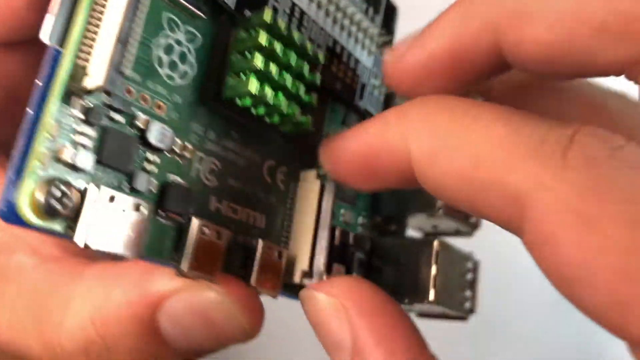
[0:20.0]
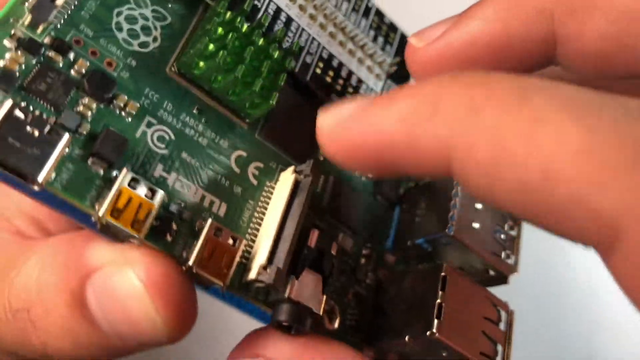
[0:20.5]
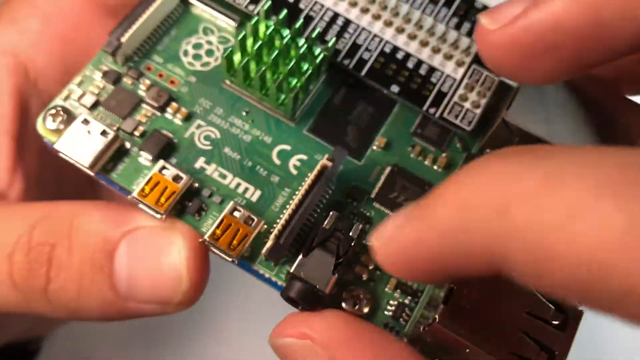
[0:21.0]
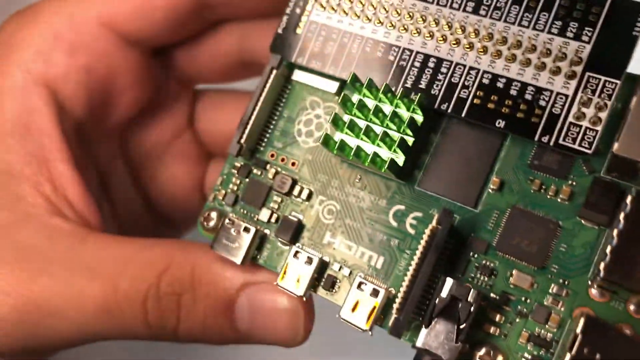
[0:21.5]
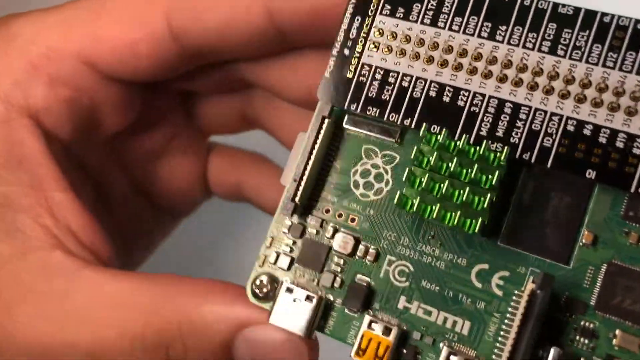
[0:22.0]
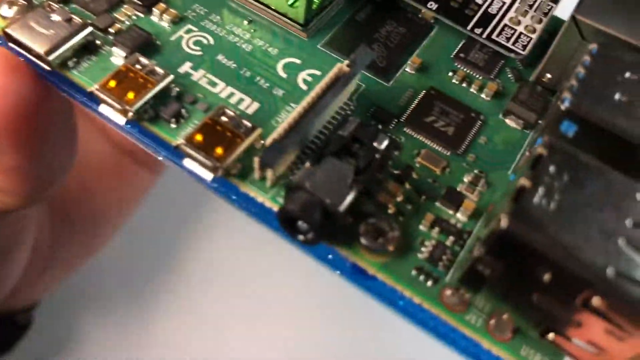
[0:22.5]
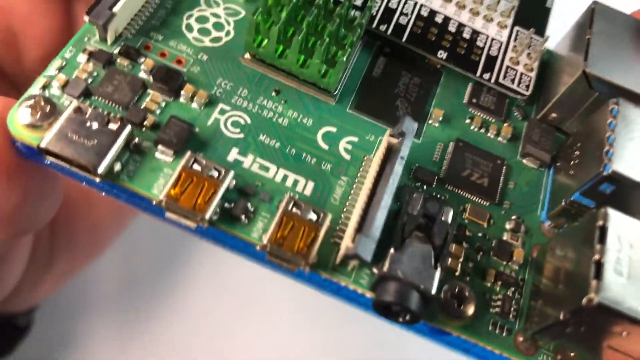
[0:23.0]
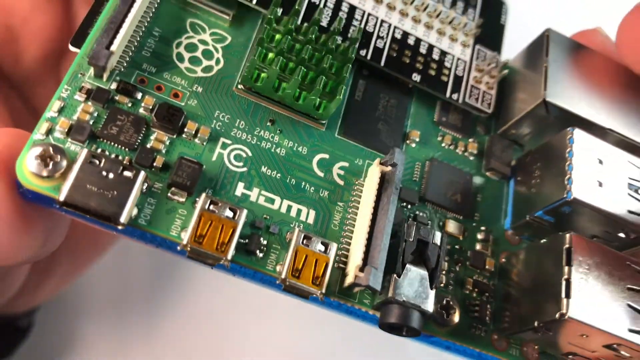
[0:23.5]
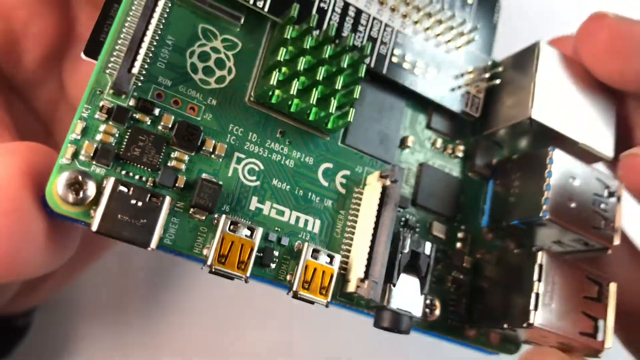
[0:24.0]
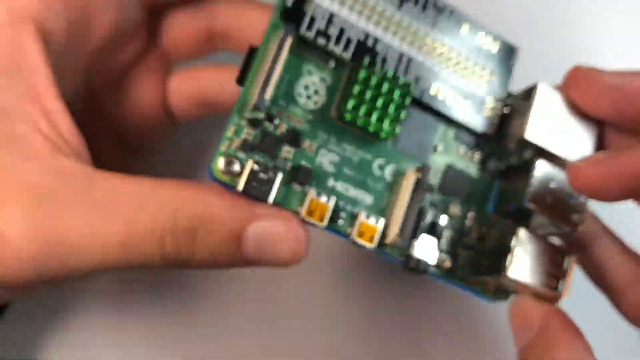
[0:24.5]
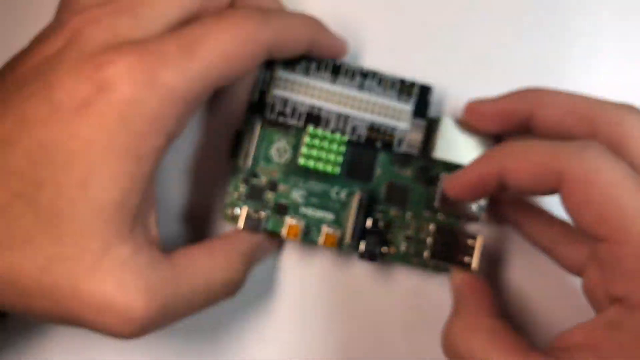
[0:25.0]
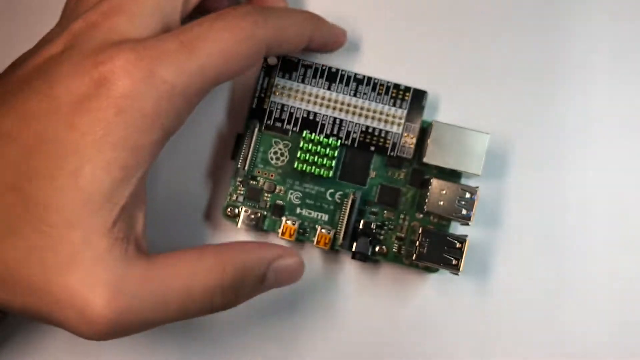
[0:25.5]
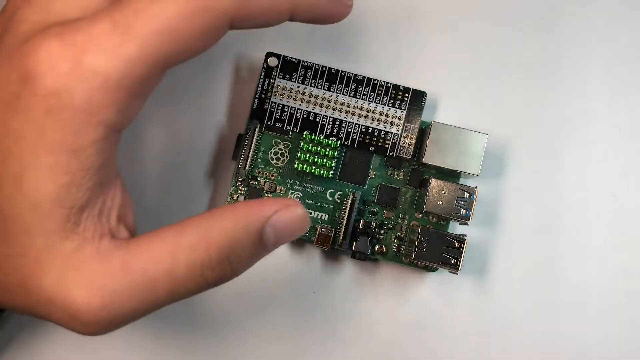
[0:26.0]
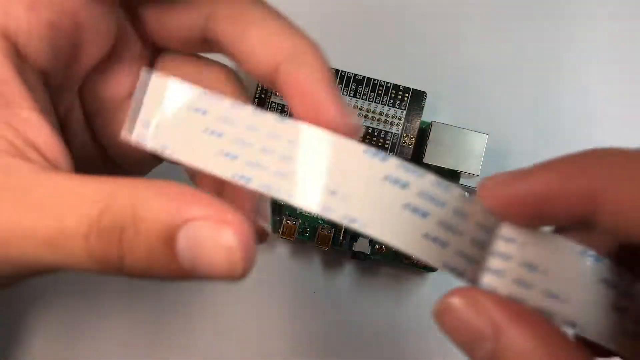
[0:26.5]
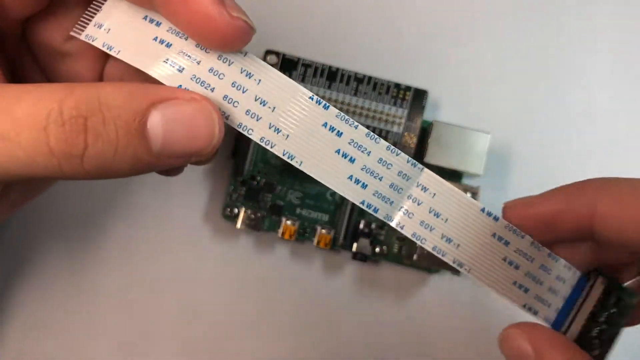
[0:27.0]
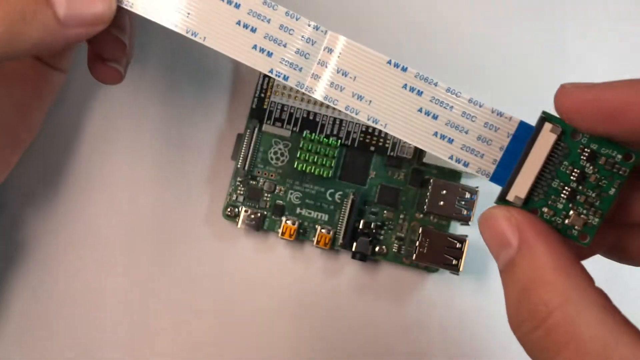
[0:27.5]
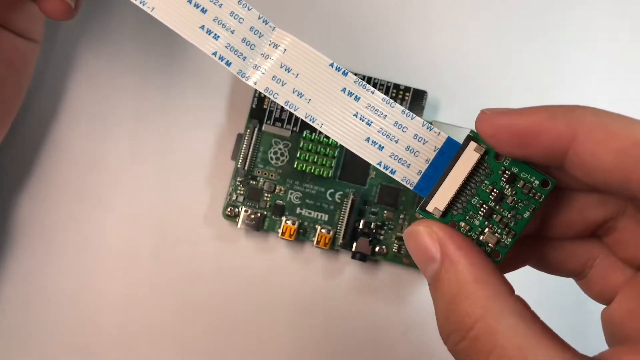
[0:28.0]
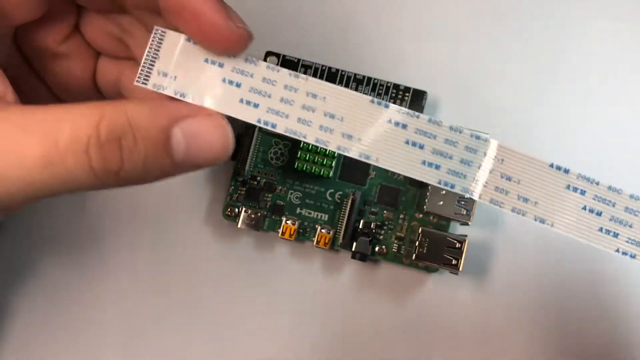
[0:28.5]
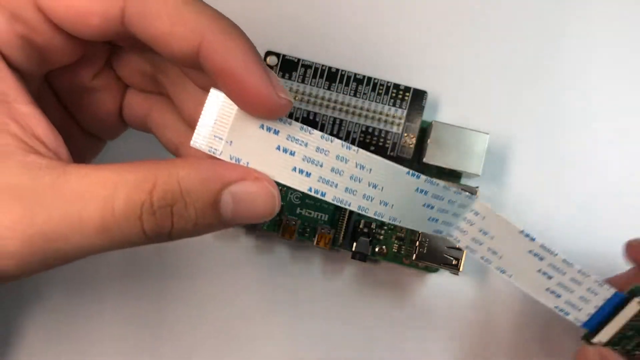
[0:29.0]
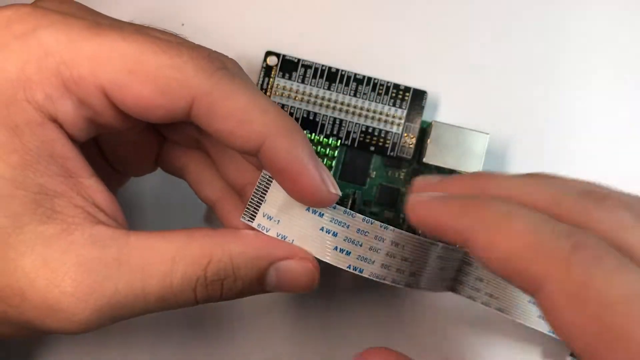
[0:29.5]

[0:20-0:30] The left thumb is on the bottom of the circuit board, and the right thumb, right index finger and right middle finger are on its right side. The board is moved to the left and to the right and then placed down on a white table. The right hand moves out of view while the left hand hovers over the board. The right hand then reappears with some sort of transparent tape that has some circuit on its end, and the tape is being used to see if it is correct for this circuit board.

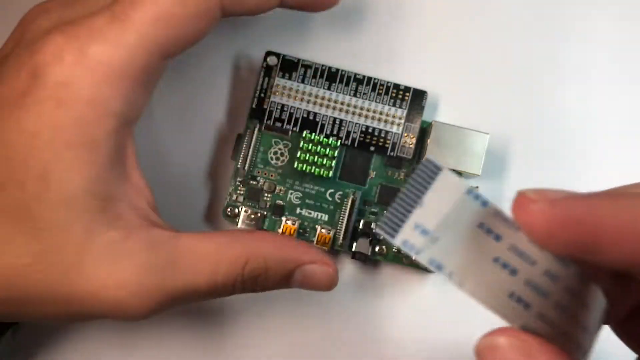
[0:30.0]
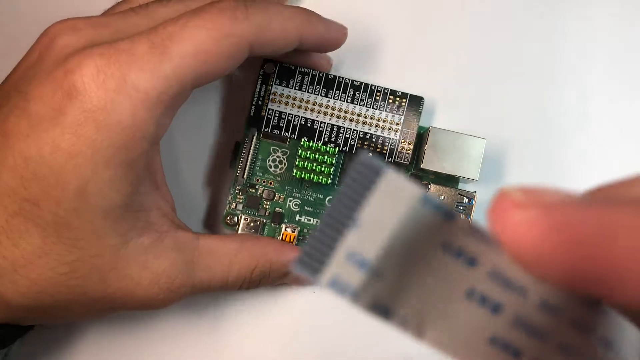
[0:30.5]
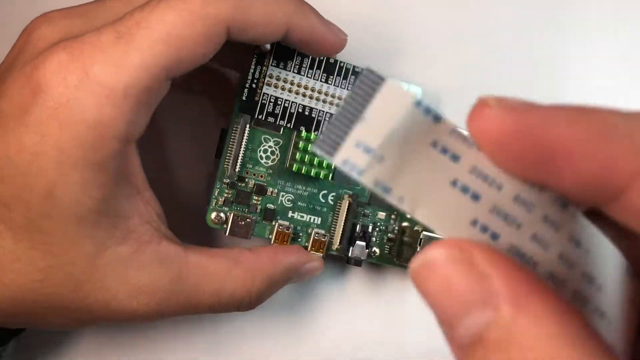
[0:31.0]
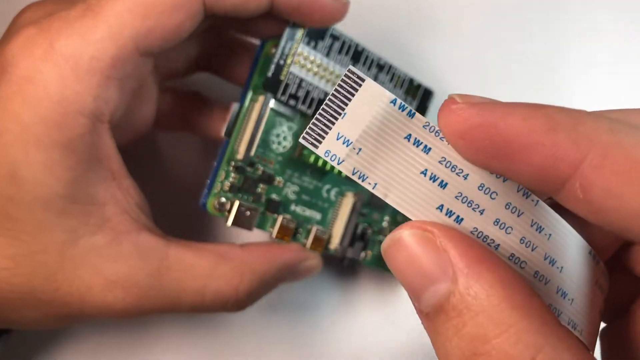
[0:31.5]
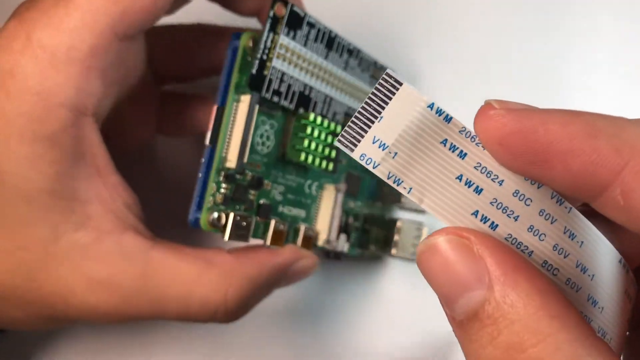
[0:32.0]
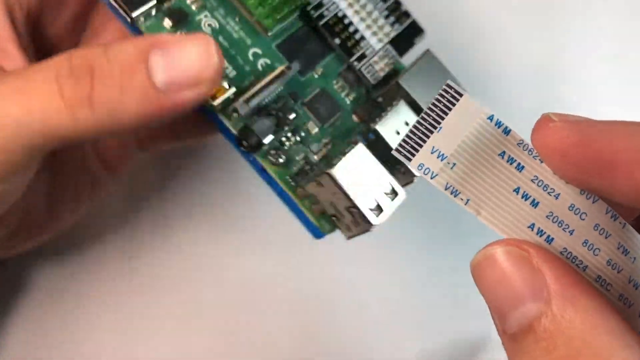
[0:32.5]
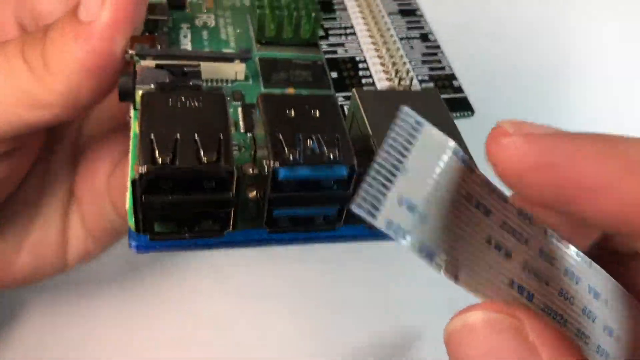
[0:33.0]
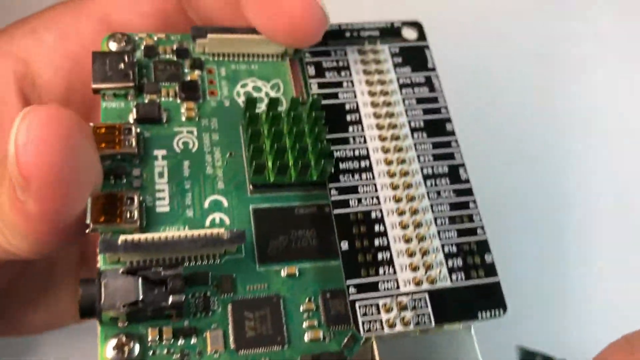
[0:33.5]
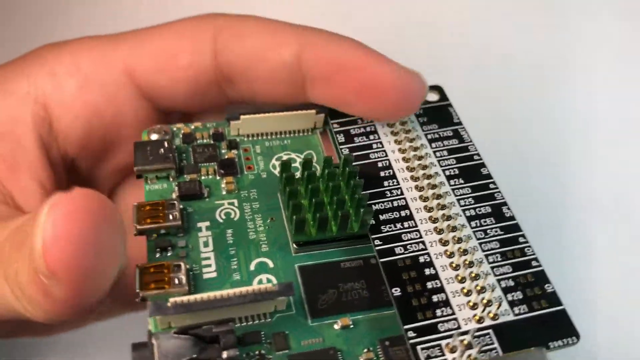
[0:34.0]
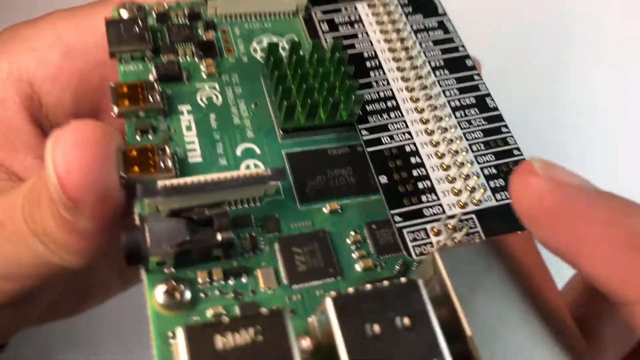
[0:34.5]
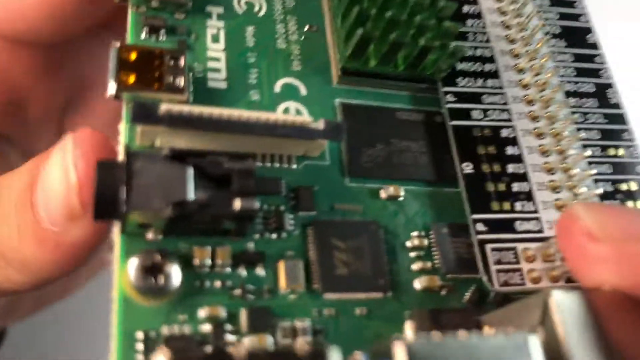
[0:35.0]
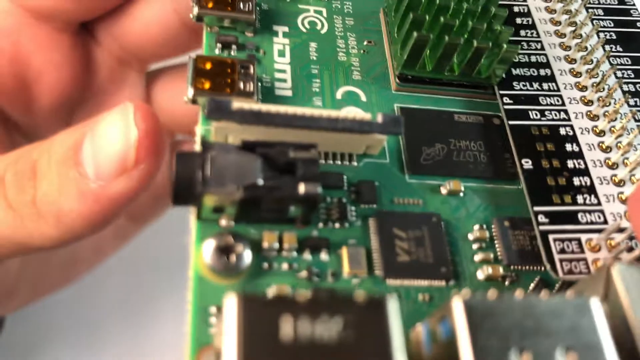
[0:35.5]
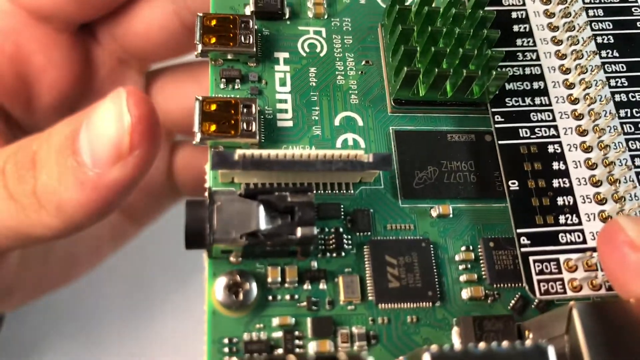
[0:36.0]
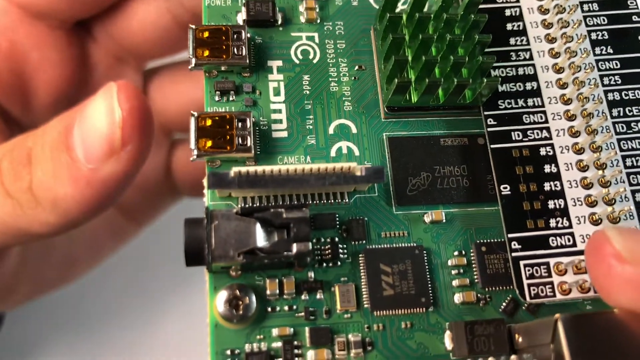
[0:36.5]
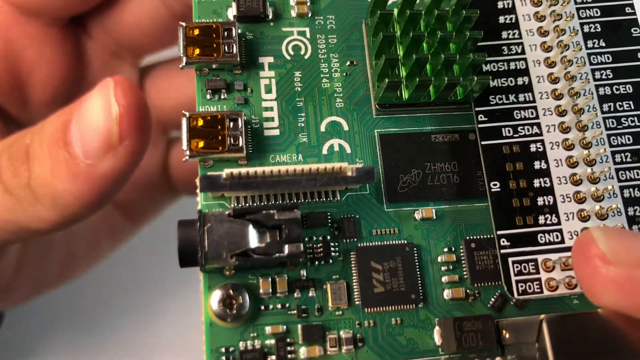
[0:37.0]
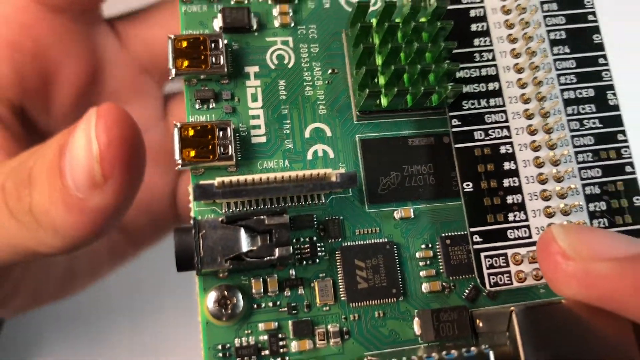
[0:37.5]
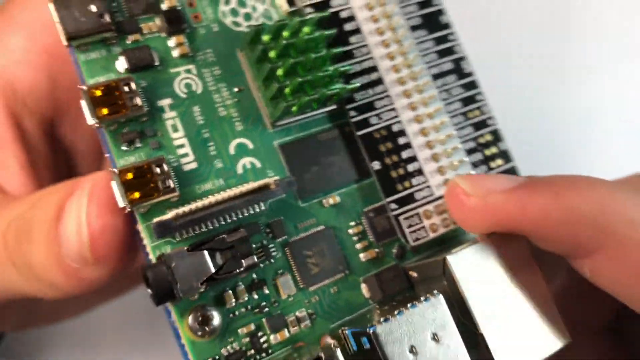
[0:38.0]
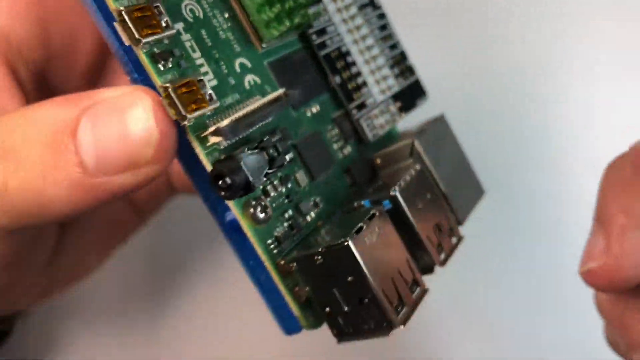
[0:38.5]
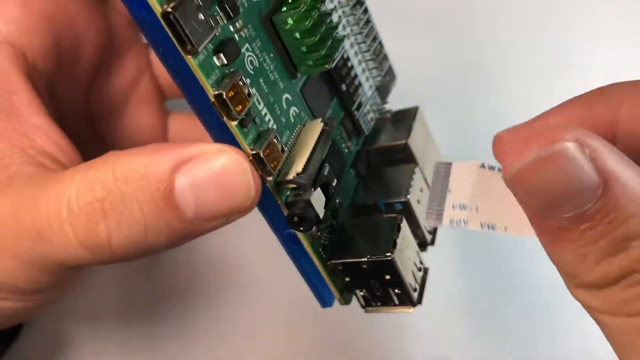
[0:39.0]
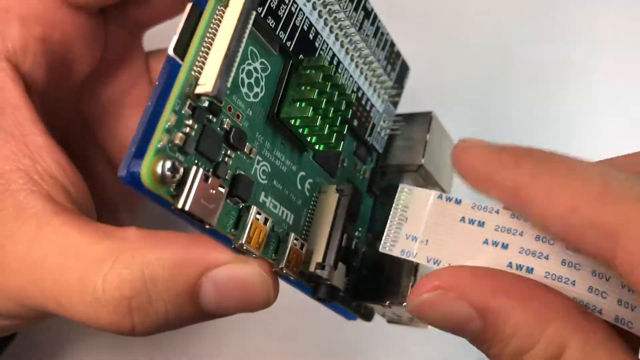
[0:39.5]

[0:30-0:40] A thumb is on the bottom of the circuit board, which rests on a white table and casts a shadow onto it. The right thumb and index finger hold a piece of electronic tape that has black and white lines on its end; most of the tape is white with some blue writing on it. The tape is hovered over the circuit board, then the board is lifted up and the tape is brought closer to it. The left index finger moves over the board, and the board is stood up and turned toward the right.